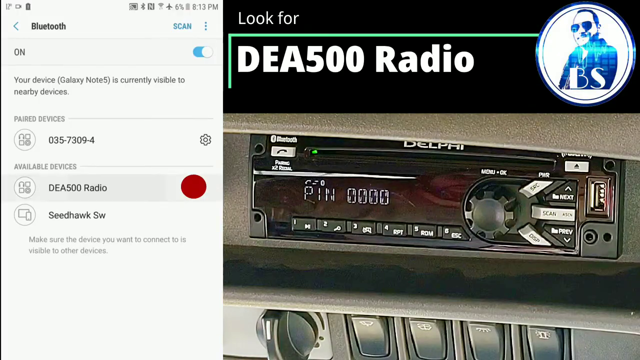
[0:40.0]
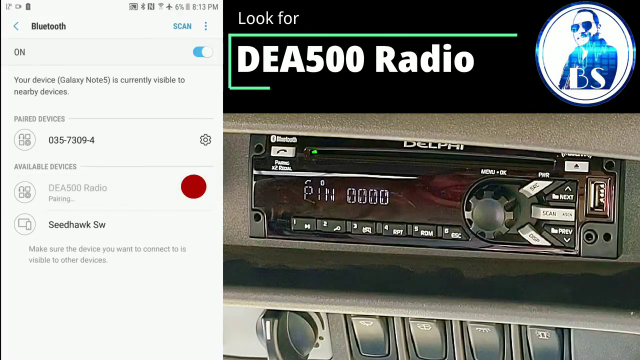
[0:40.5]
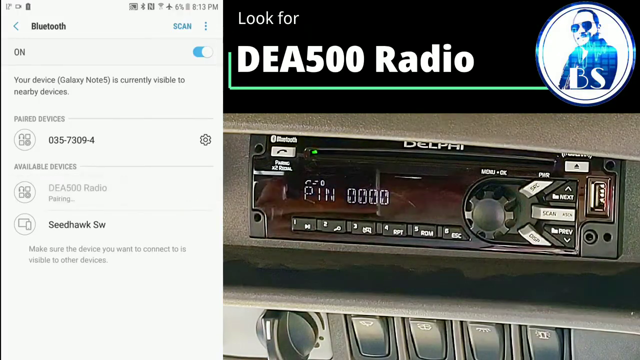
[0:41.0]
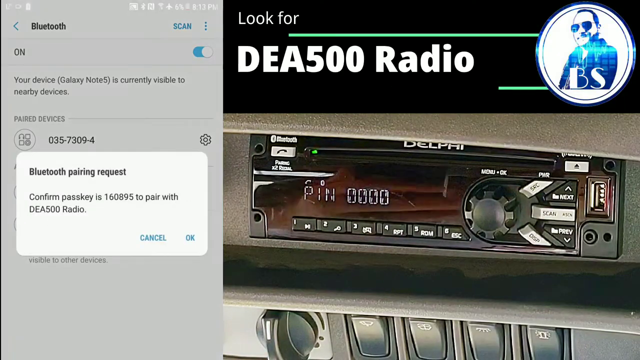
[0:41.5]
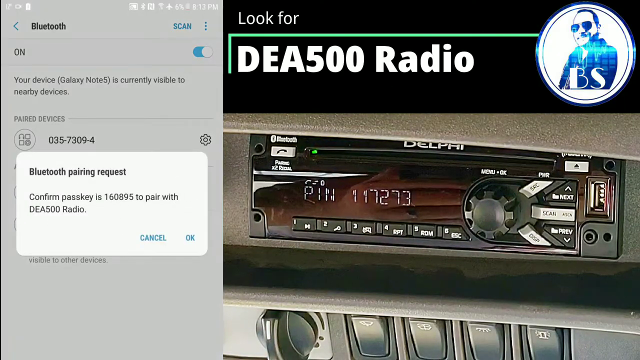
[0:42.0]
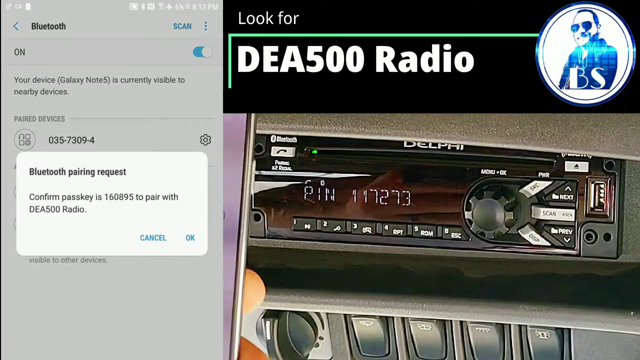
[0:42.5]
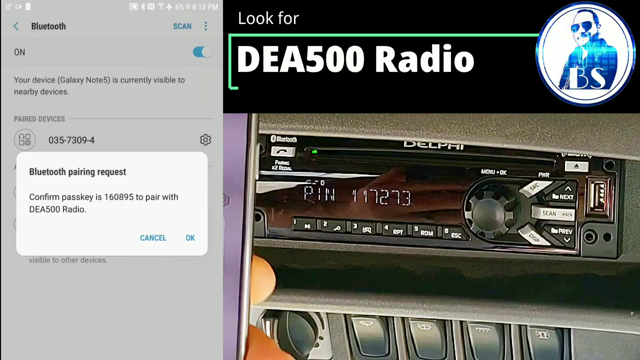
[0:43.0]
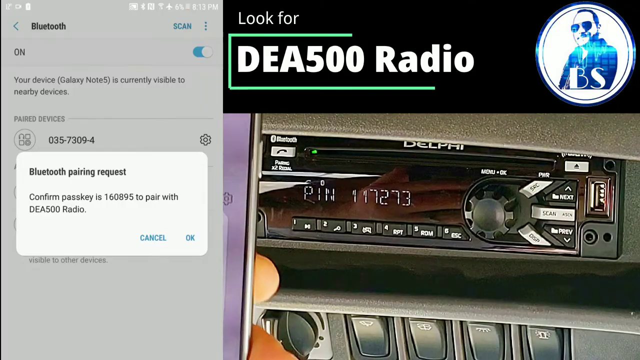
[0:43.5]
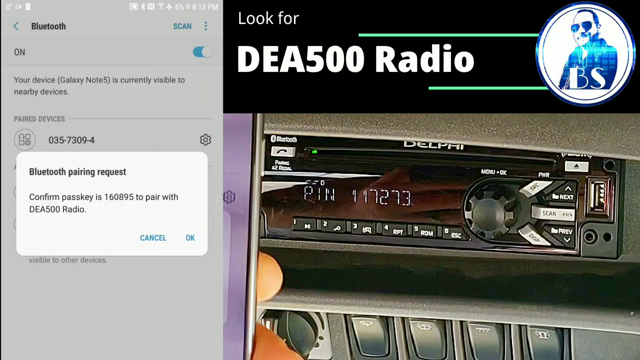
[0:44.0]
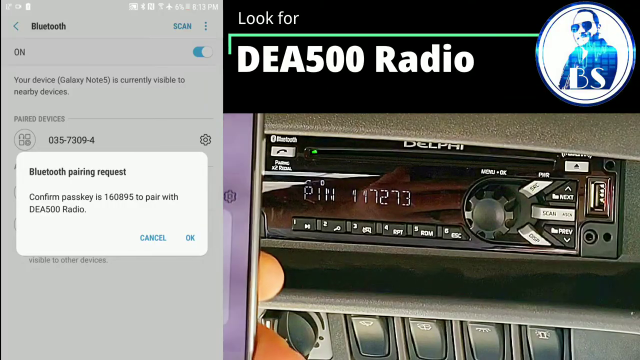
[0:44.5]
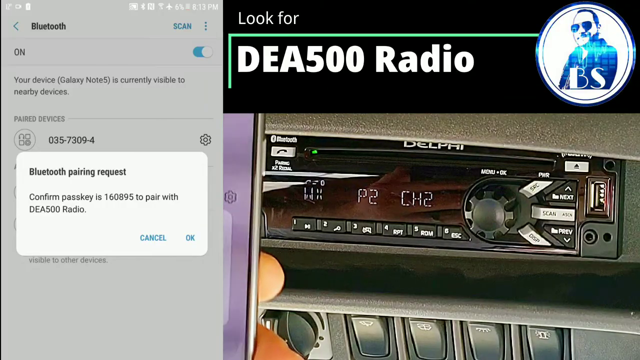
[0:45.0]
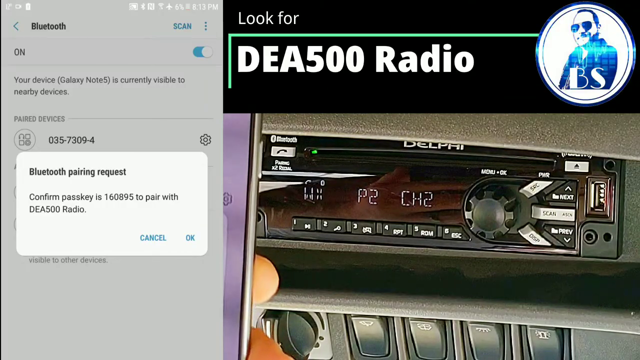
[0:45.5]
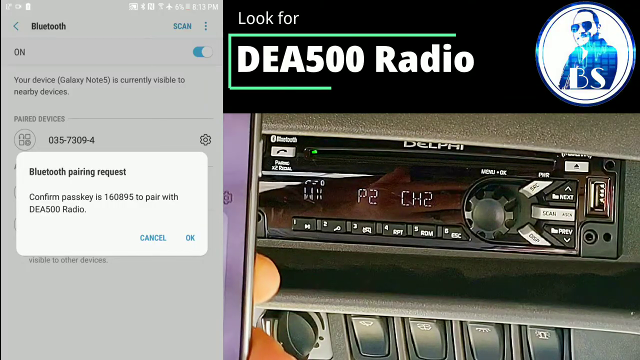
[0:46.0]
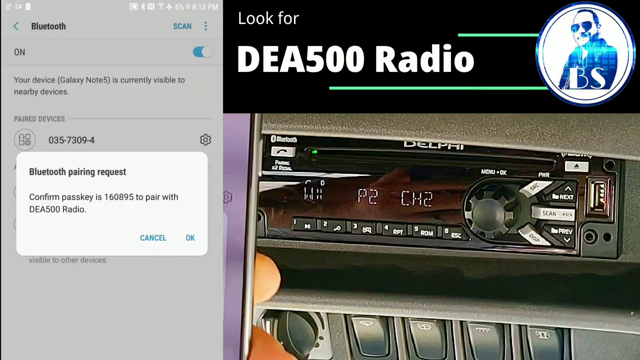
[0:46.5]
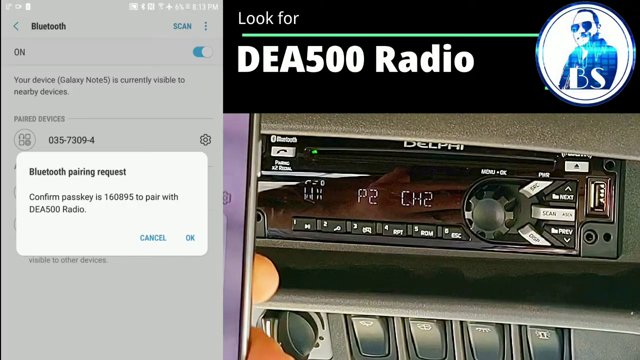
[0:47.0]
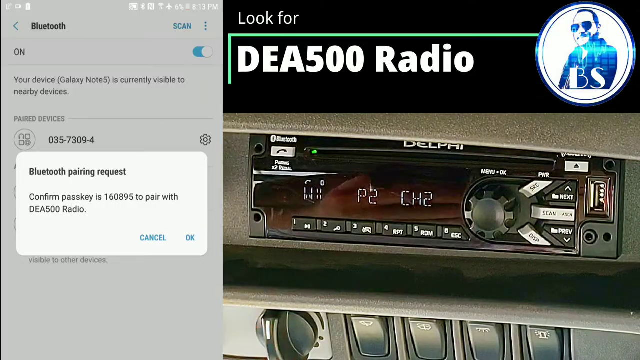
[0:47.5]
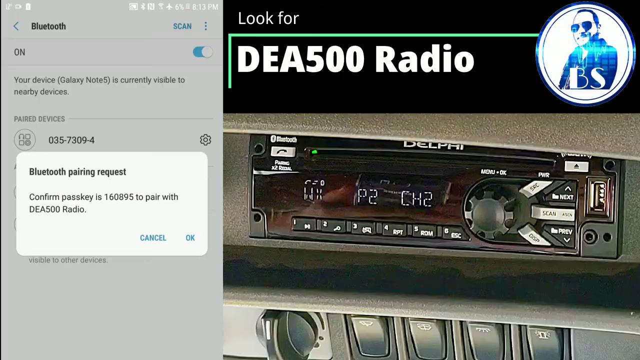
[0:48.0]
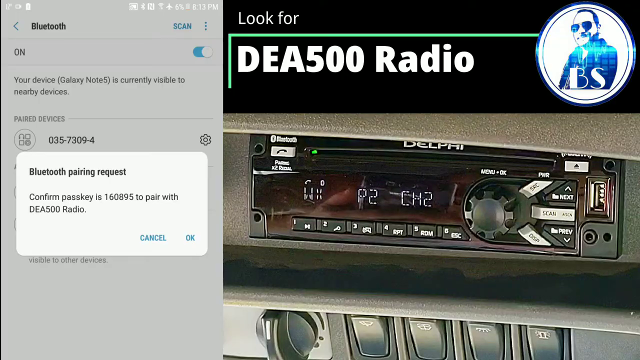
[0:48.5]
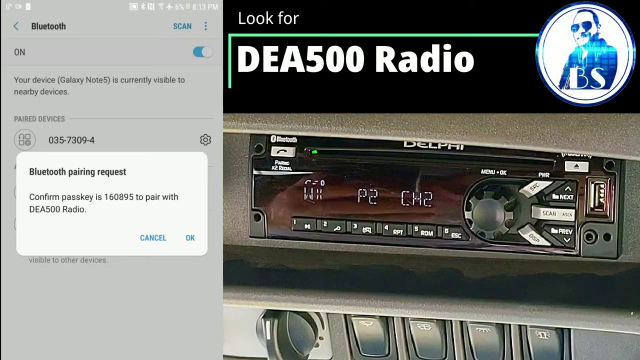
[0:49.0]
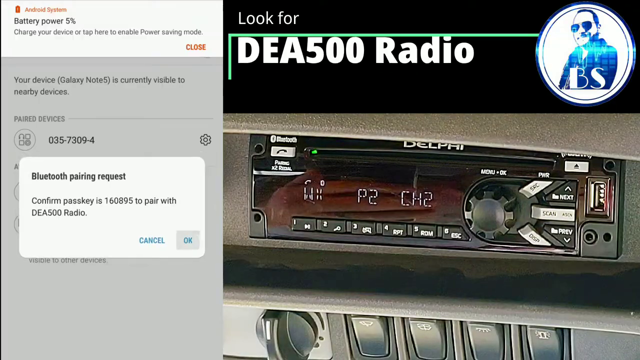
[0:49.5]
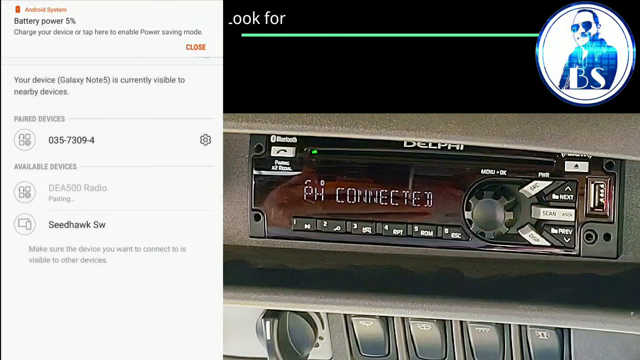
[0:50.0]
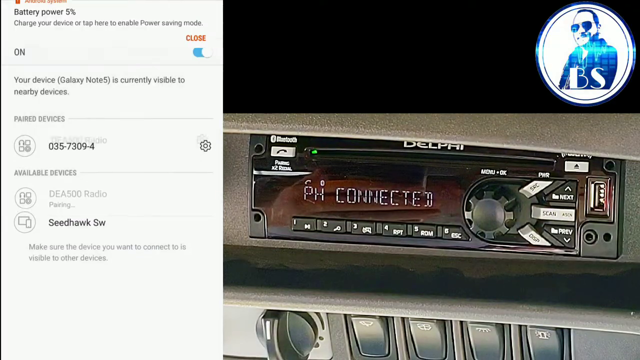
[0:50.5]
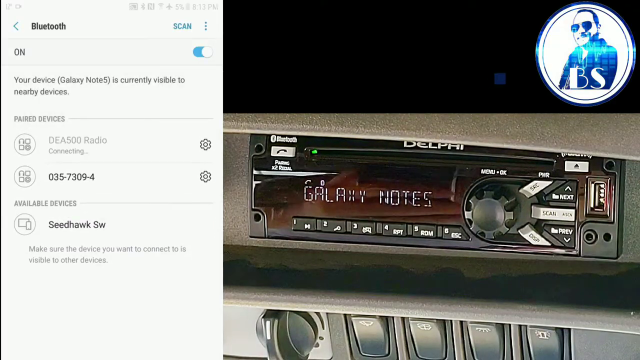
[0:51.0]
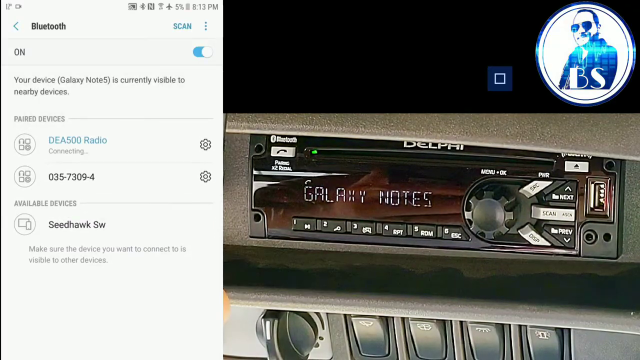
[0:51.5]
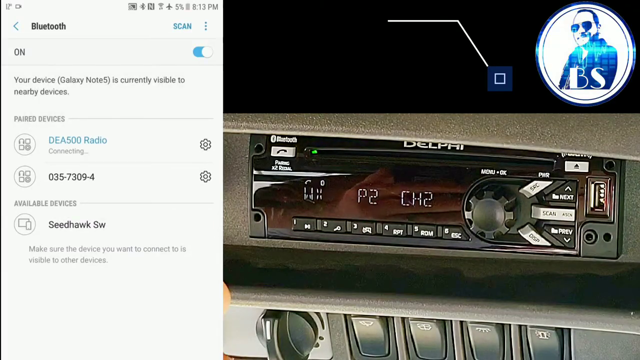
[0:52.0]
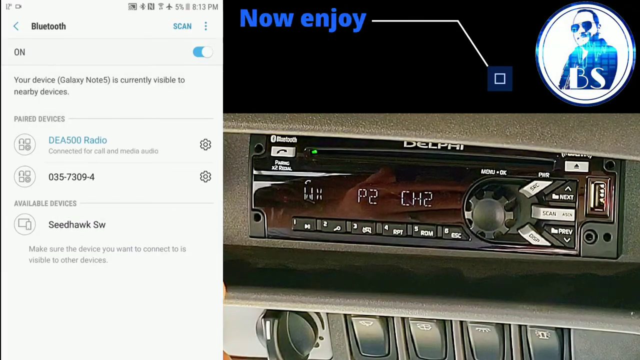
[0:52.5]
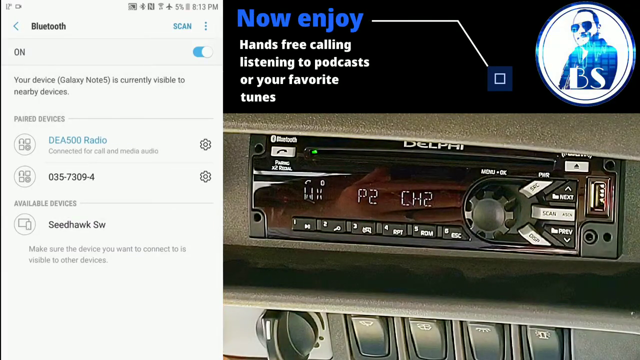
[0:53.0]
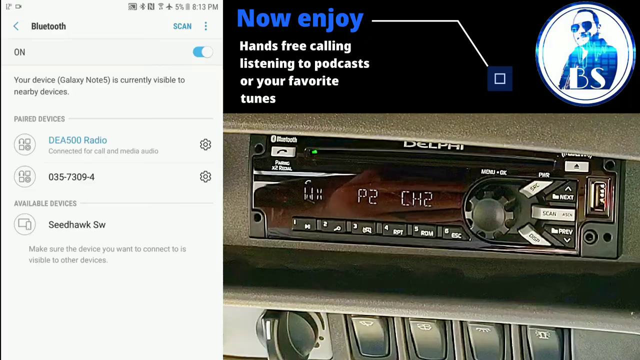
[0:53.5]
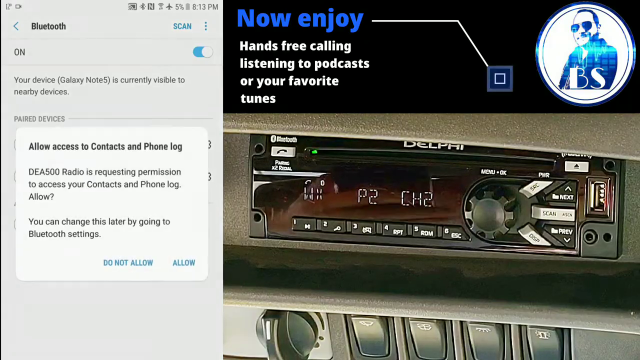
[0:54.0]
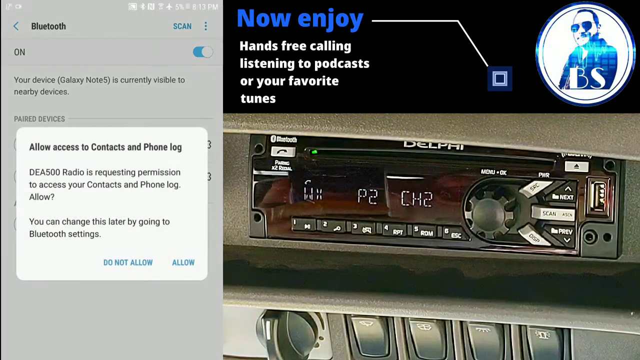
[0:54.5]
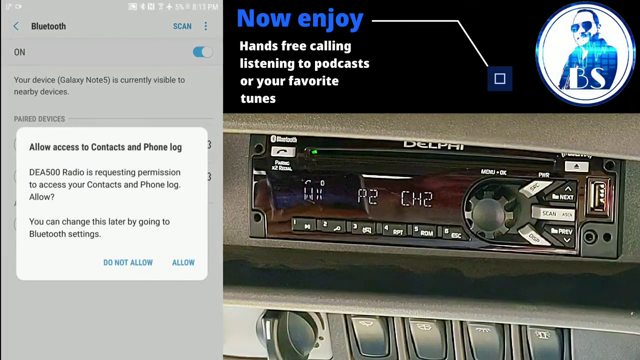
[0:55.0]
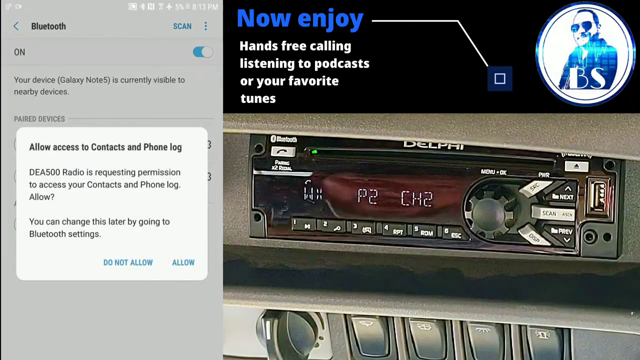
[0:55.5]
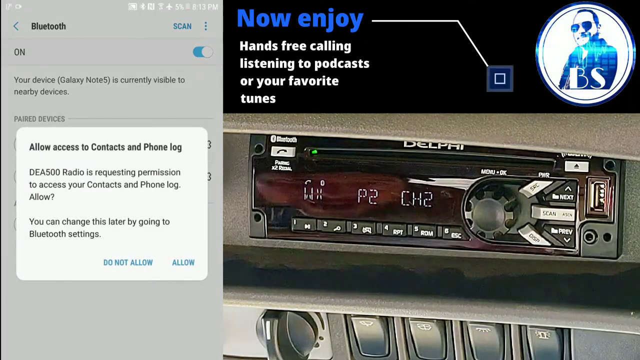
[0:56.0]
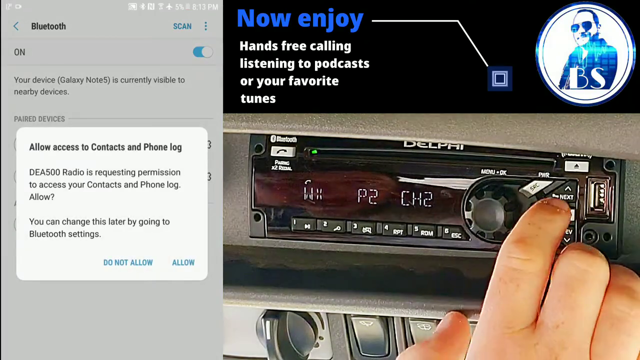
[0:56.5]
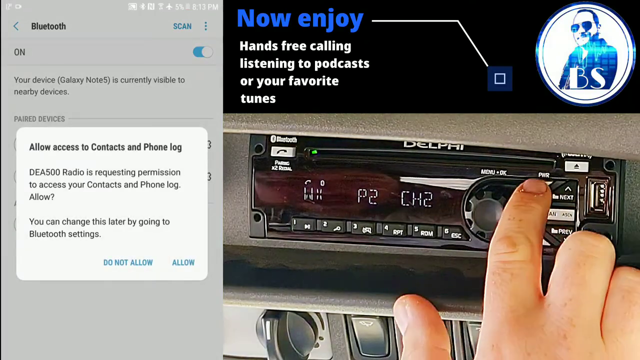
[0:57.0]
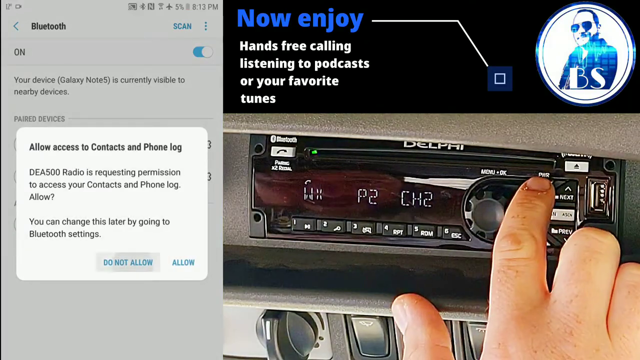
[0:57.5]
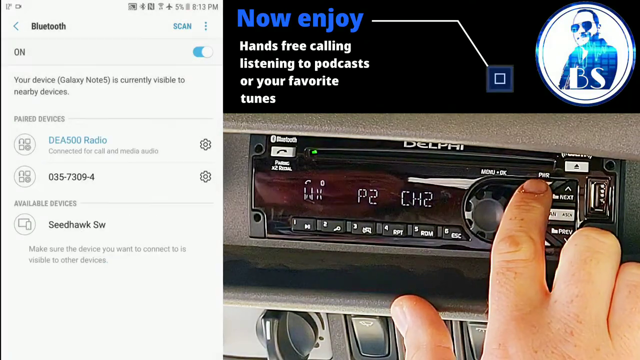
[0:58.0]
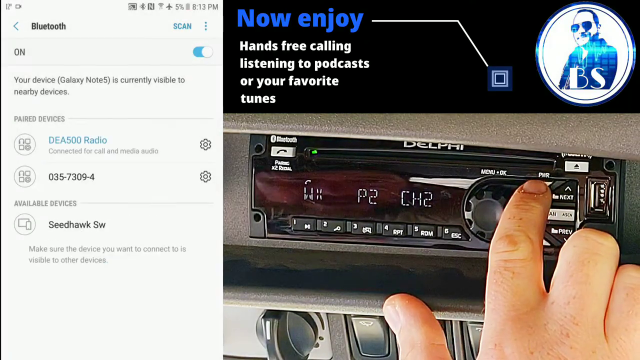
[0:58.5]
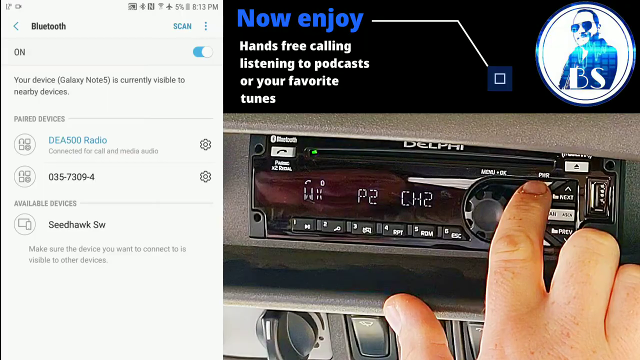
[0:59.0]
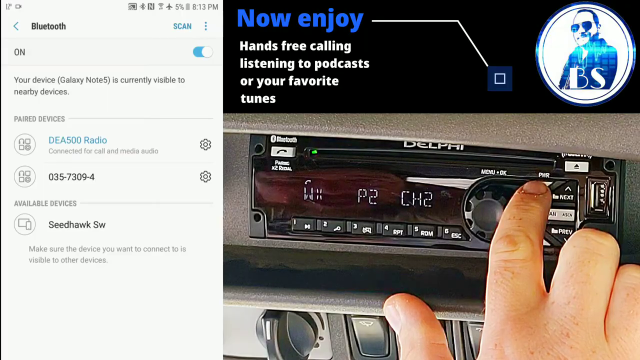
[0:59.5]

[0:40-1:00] In the split screen, a shared phone screen occupies one part and a car radio audio system fills the other two-thirds. A person holds a phone to the right of the radio video, and a text banner above the radio reads "look for DEA 500 radio". On the phone side, a "Bluetooth pairing request" appears: "Confirm passkey is 160895 to pair with DEA 500 radio", with OK and Cancel buttons. A battery warning then appears on the phone side saying the battery is low. The radio shows "Galaxy Notes", and the banner above the radio changes to "now enjoy hands-free calling, listening to podcasts, or your favorite tunes". The phone then shows "allow access to contacts and phone log. DEA500 radio is requesting permission to access your contacts and phone log. Allow. You can change this later by going to the Bluetooth settings." The person clicks a knob on the car labeled "SRC".